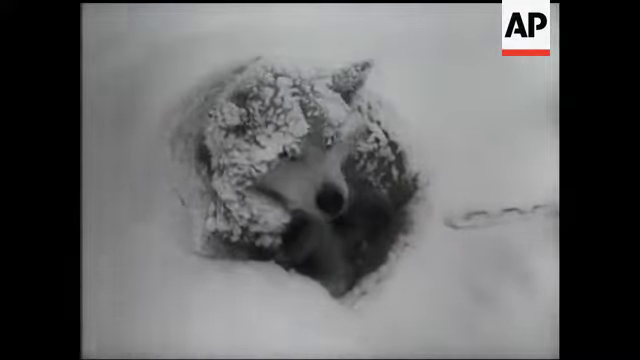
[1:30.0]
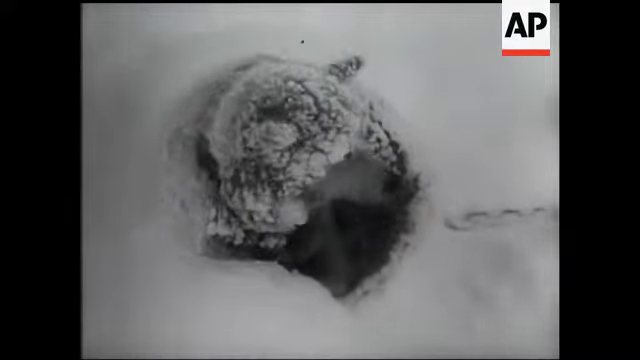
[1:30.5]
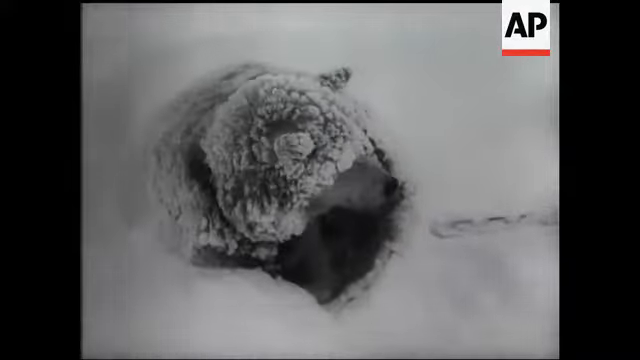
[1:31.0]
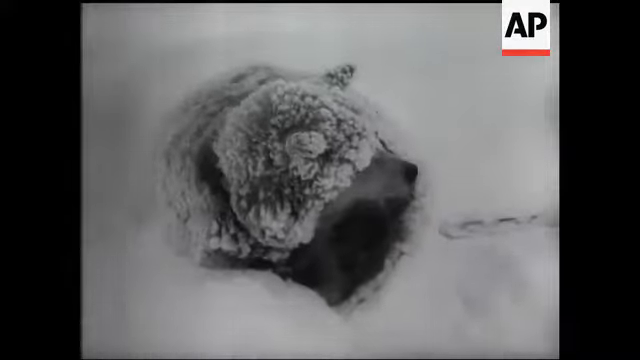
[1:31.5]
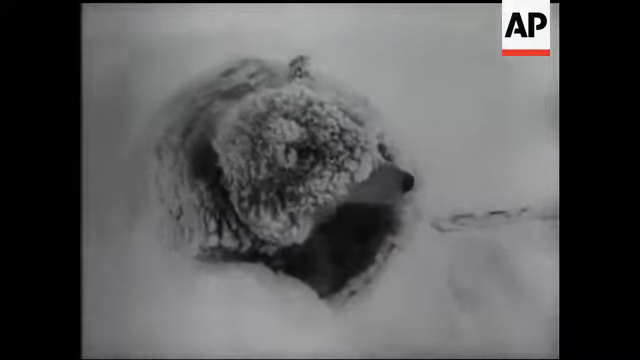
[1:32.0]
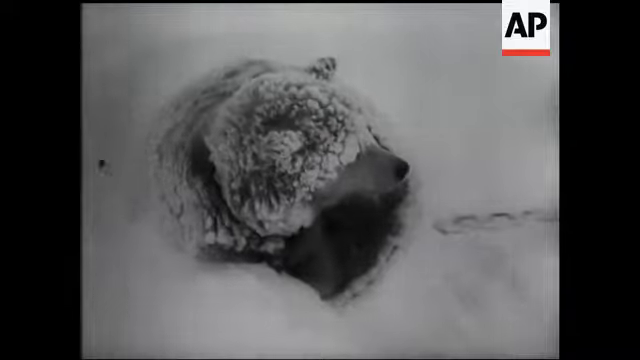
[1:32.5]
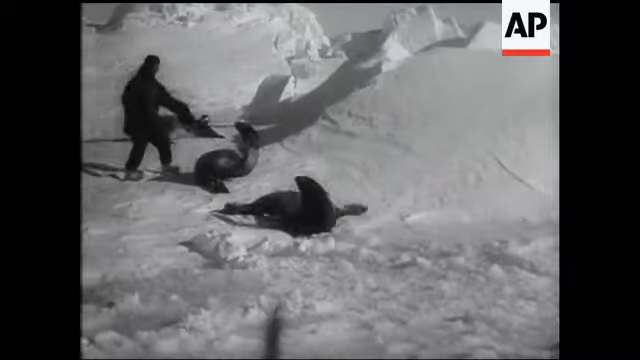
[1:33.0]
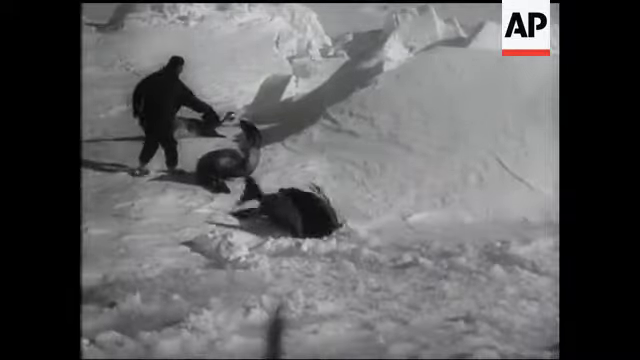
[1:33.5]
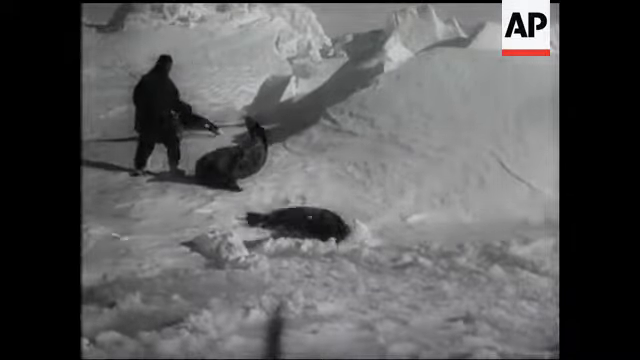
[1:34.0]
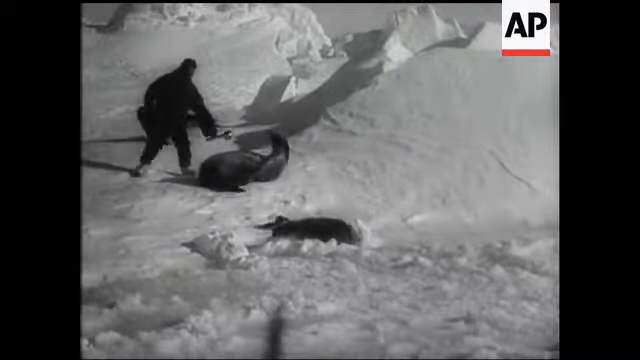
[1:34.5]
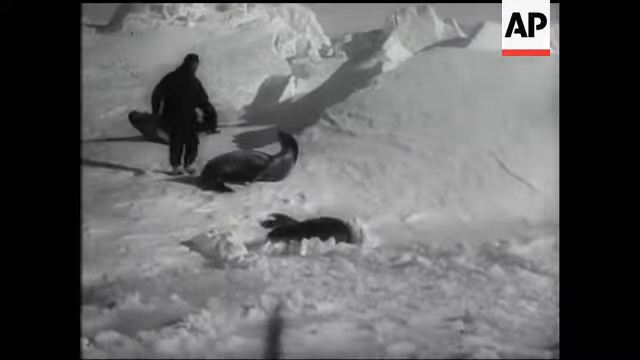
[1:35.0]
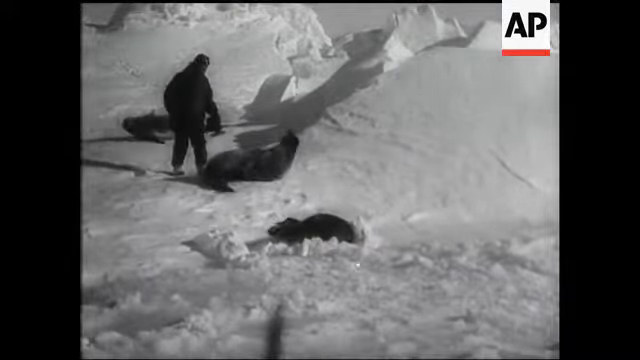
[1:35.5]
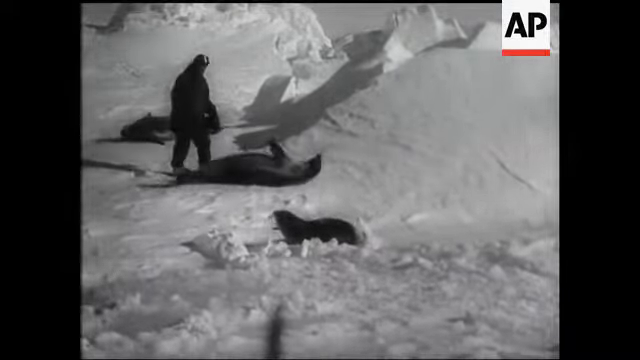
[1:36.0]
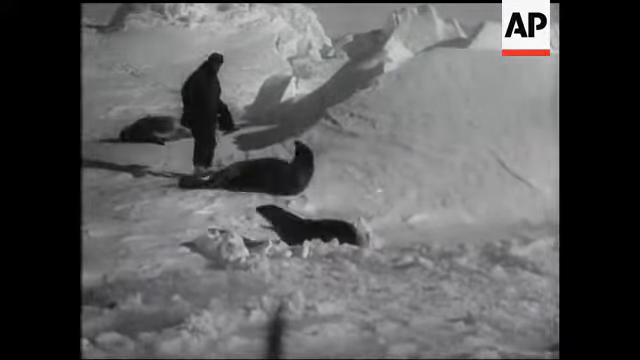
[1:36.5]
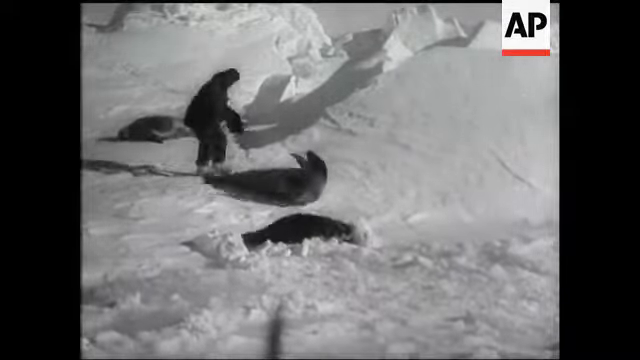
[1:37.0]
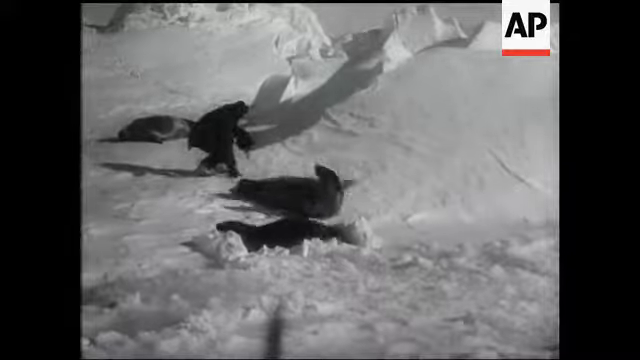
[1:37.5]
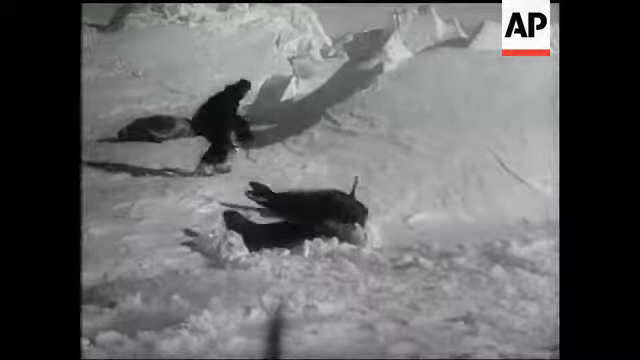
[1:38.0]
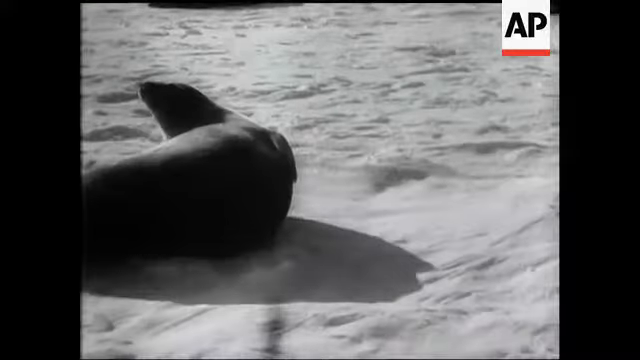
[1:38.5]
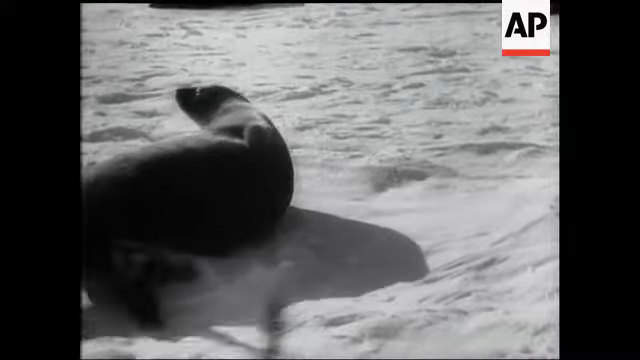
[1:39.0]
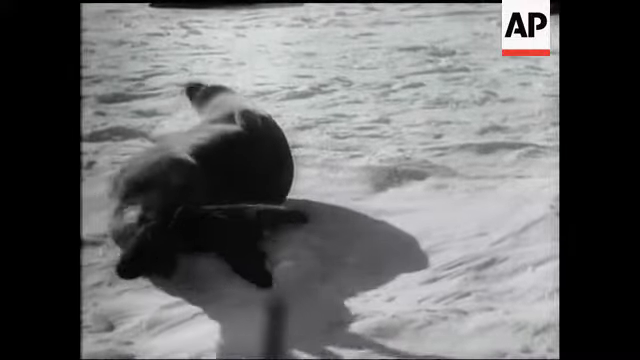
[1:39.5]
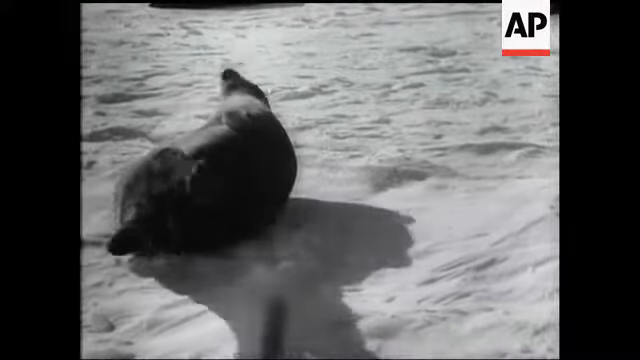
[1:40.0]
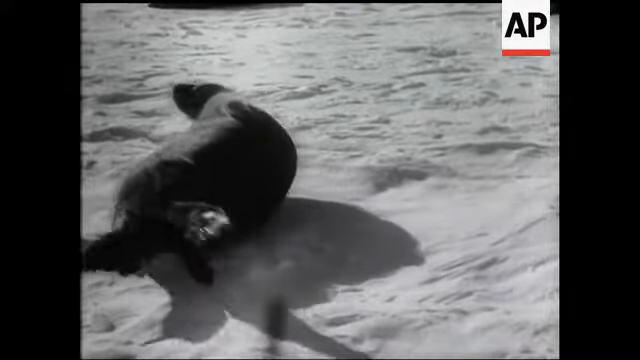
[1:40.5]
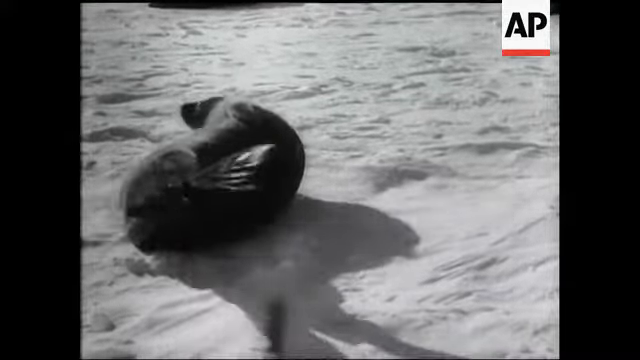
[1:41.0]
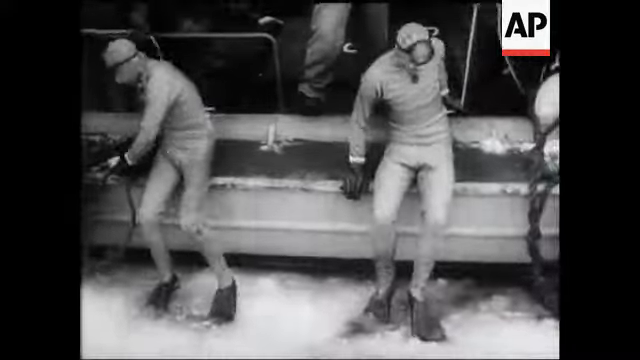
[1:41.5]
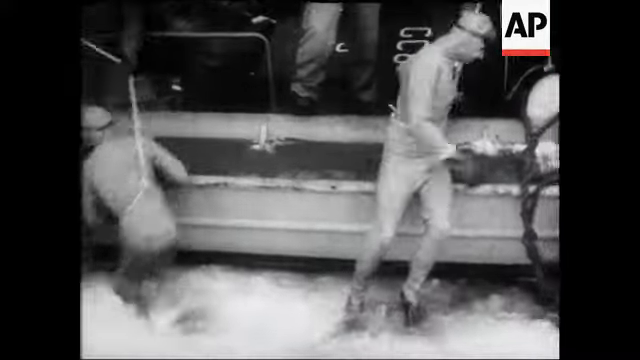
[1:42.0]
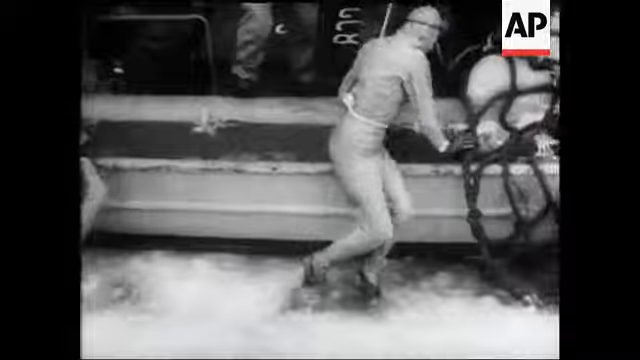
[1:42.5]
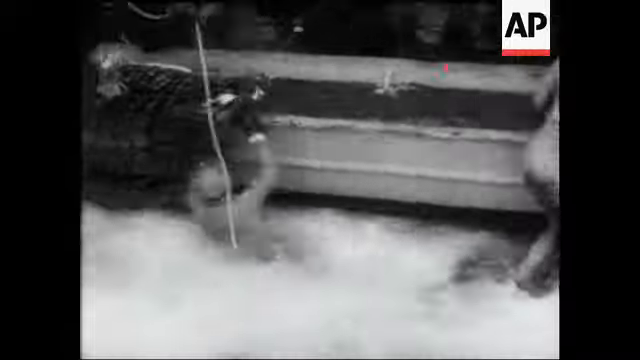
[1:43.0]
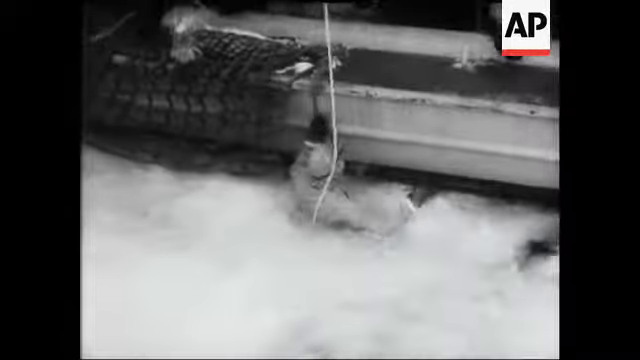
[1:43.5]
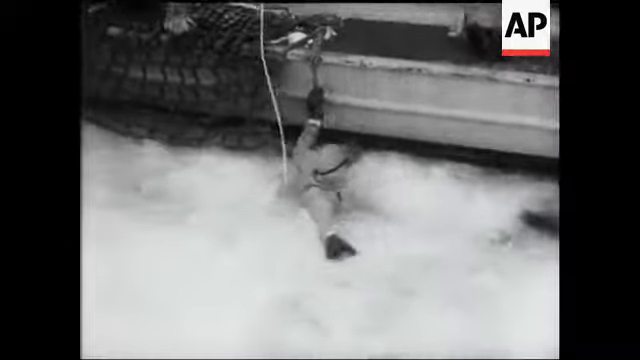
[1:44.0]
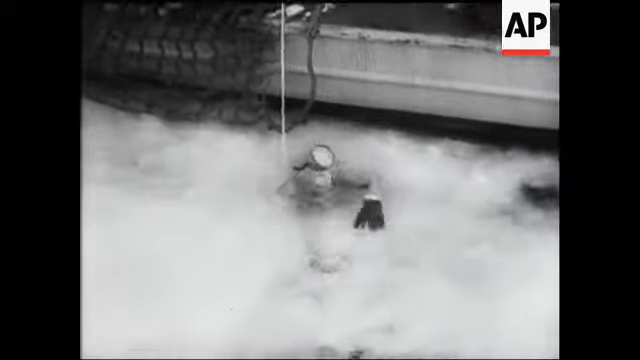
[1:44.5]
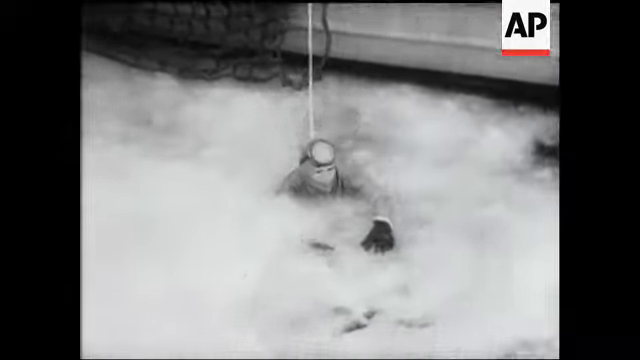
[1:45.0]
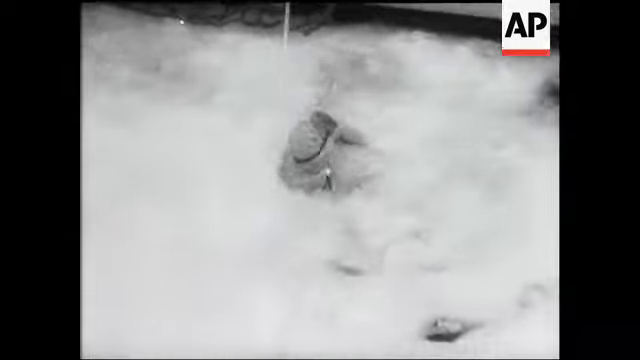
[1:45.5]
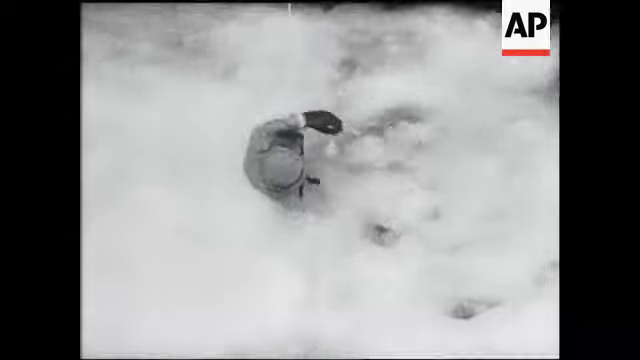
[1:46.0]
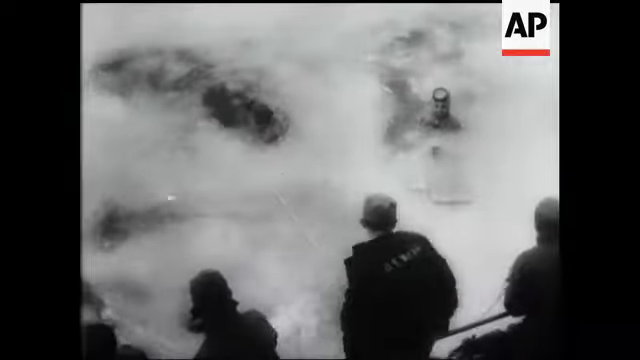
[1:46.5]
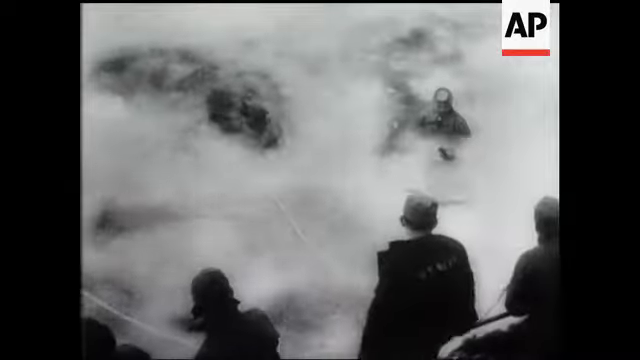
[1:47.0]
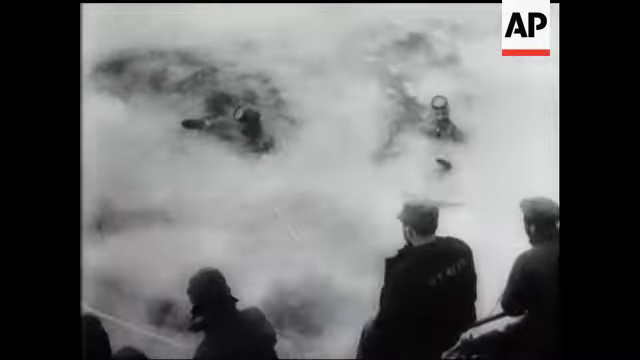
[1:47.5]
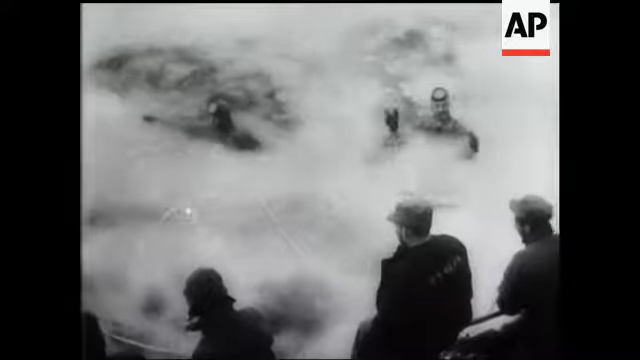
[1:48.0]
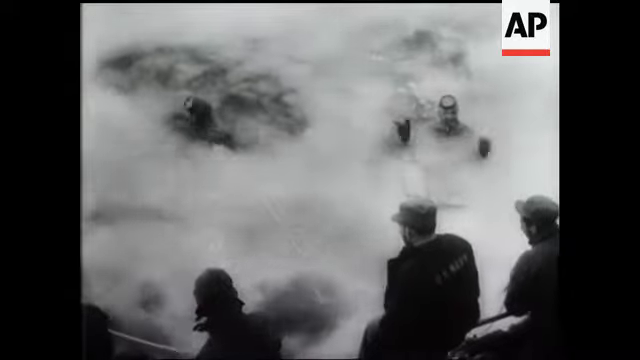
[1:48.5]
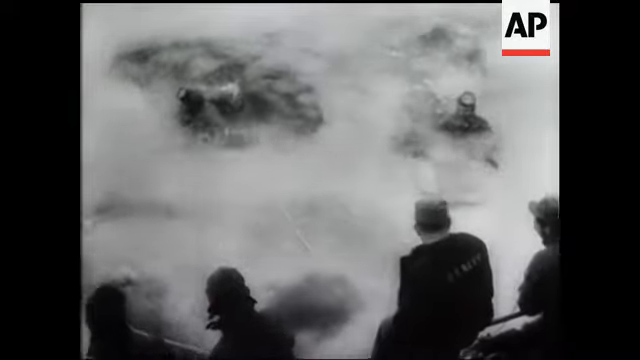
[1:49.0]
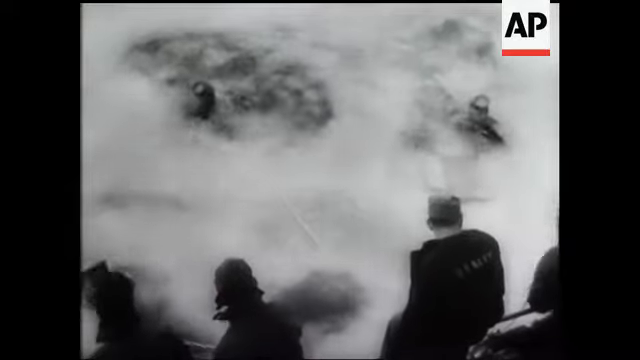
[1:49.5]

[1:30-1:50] A close-up shows one of the husky dogs buried in the snow, with frost on its ears and fur but a clear nose; it is barking. Next, a man tries to pat a couple of seals that slide away from him across the ice. Then divers descend through holes in the ice into the sea, surrounded by chunks of broken pack ice. About four or five very heavily dressed people, all wearing either fur hats or army caps, work with them and carefully watch the two divers.